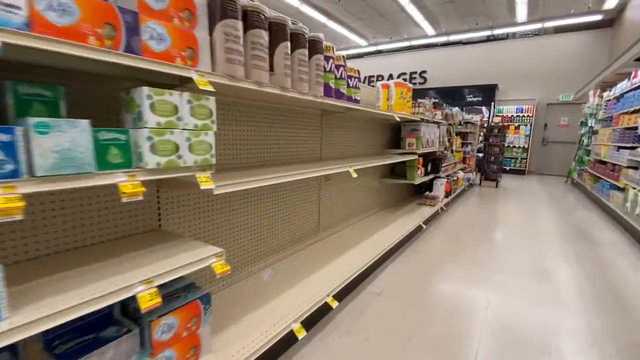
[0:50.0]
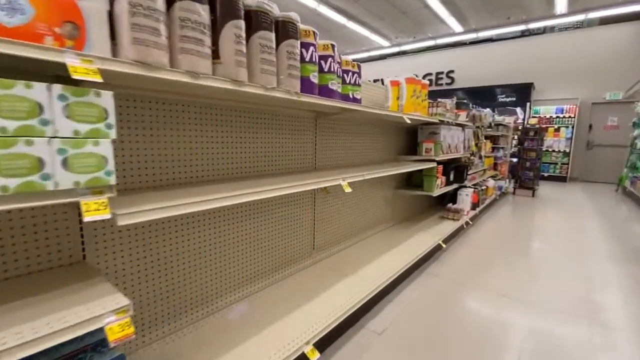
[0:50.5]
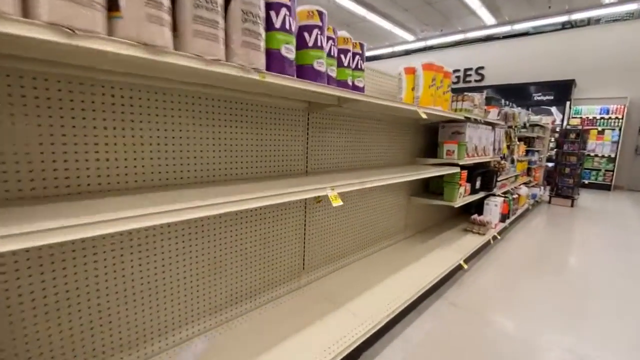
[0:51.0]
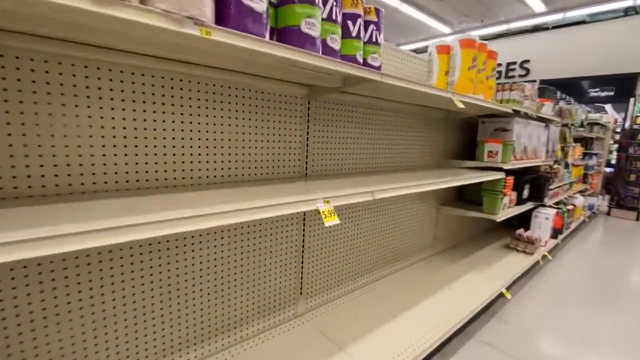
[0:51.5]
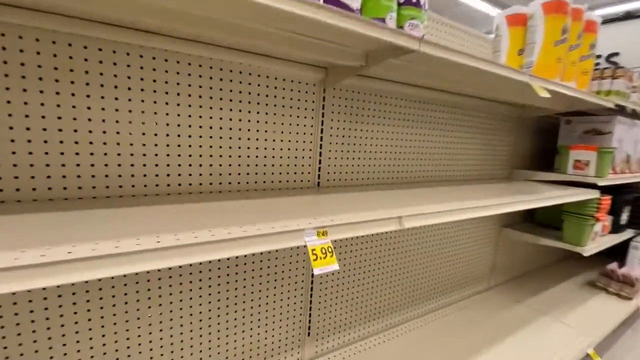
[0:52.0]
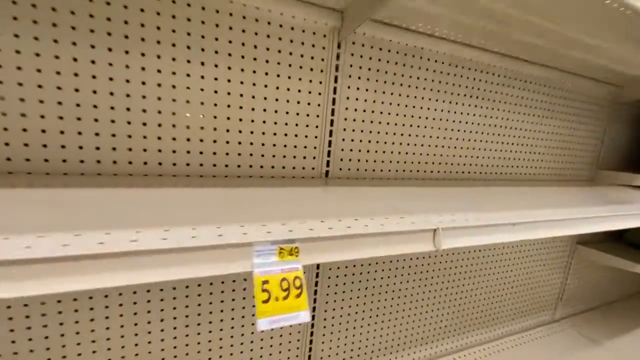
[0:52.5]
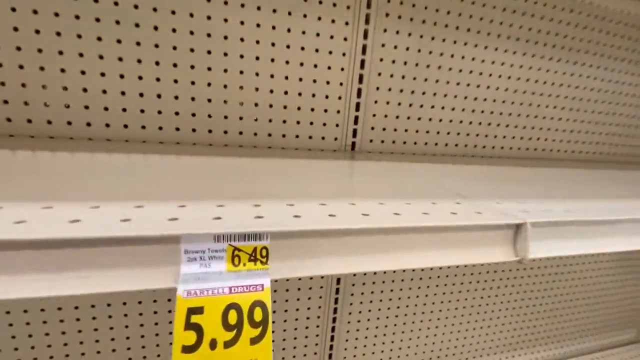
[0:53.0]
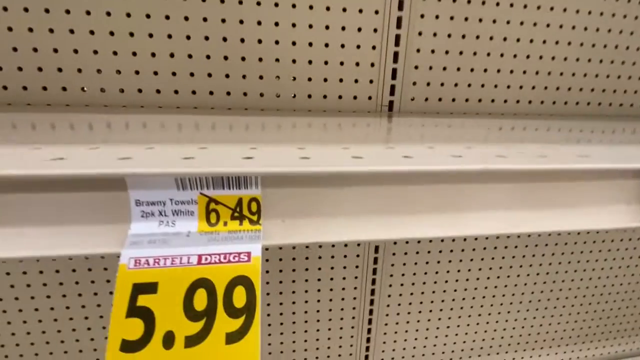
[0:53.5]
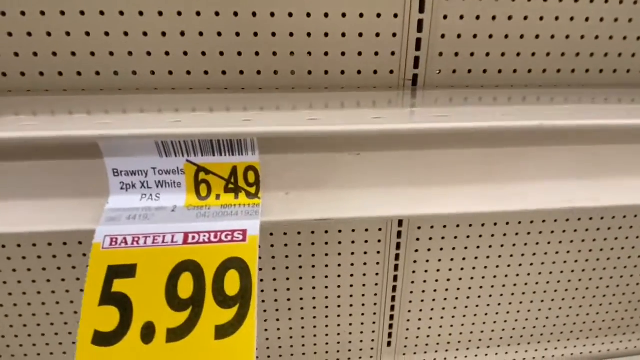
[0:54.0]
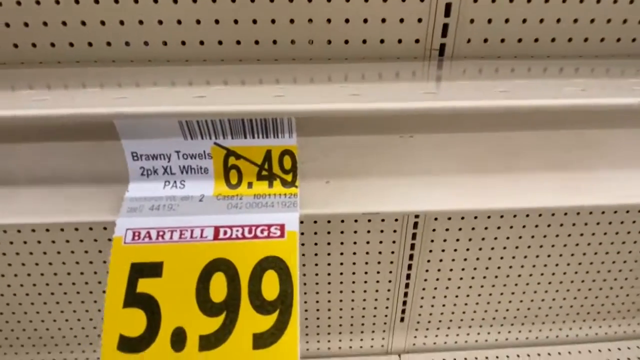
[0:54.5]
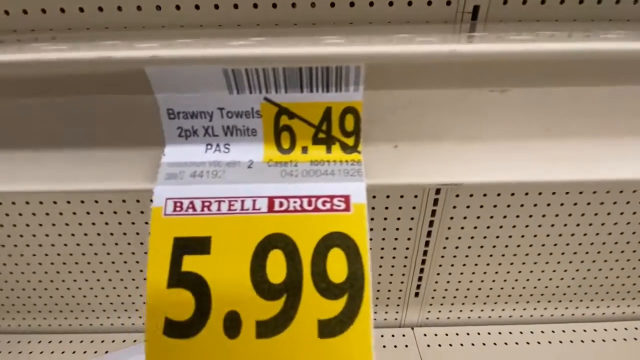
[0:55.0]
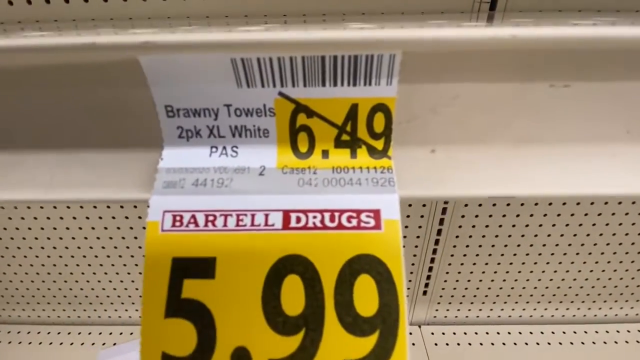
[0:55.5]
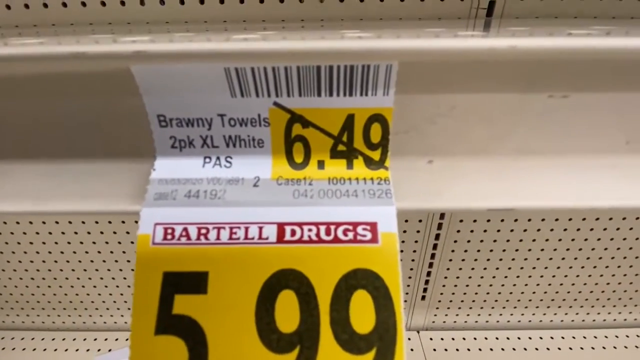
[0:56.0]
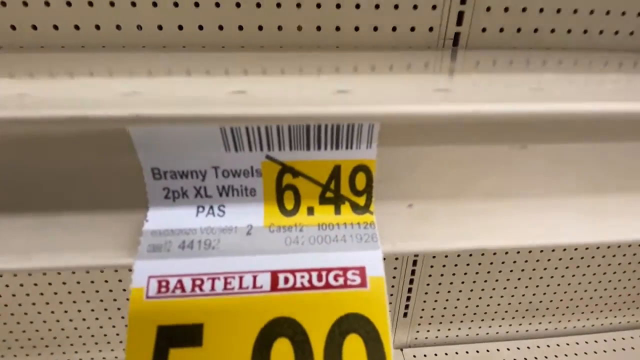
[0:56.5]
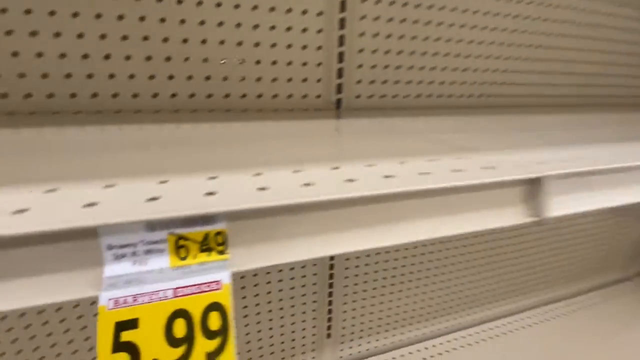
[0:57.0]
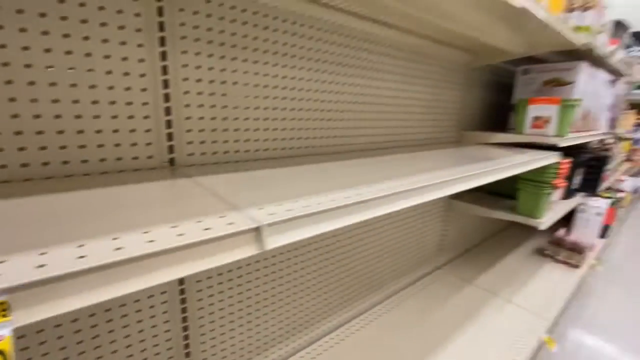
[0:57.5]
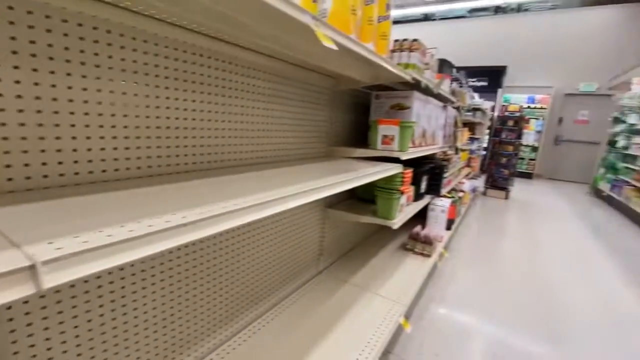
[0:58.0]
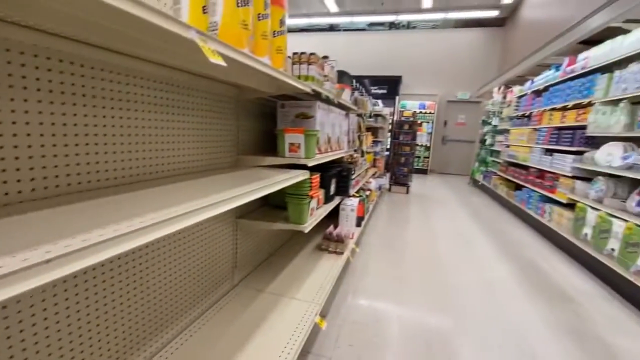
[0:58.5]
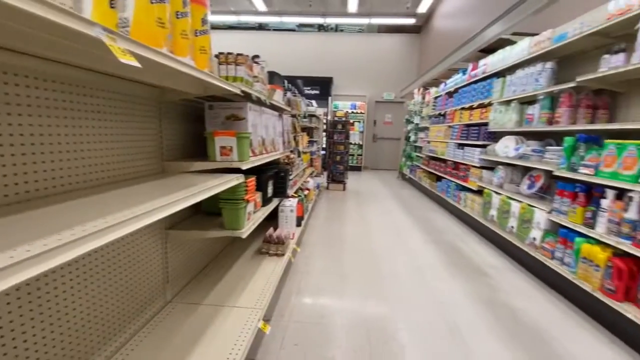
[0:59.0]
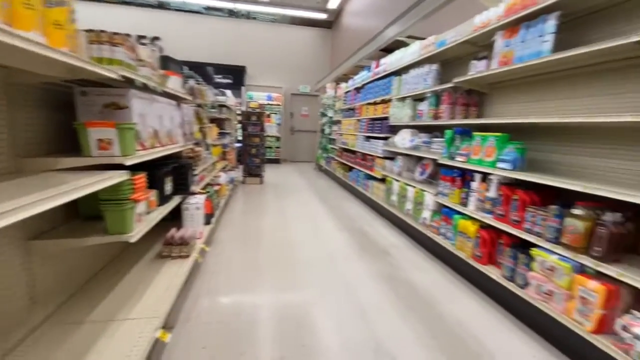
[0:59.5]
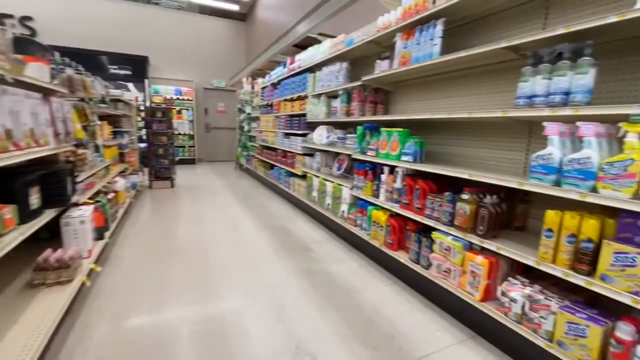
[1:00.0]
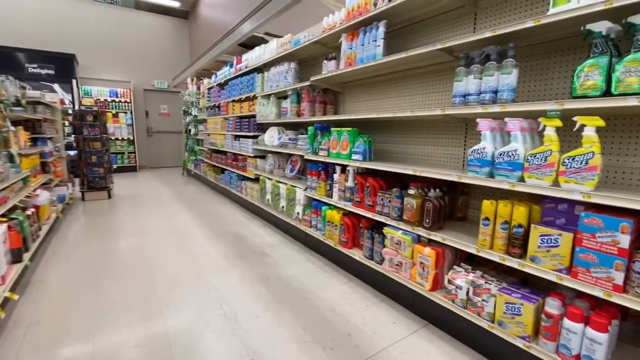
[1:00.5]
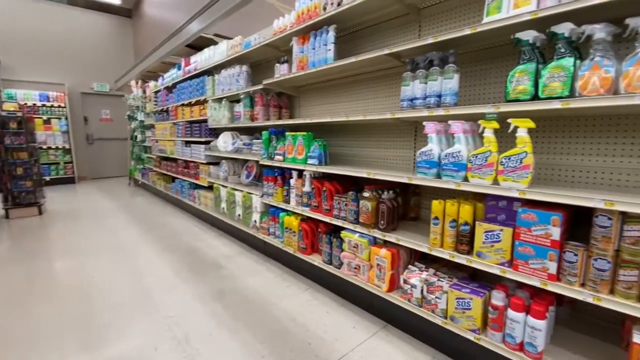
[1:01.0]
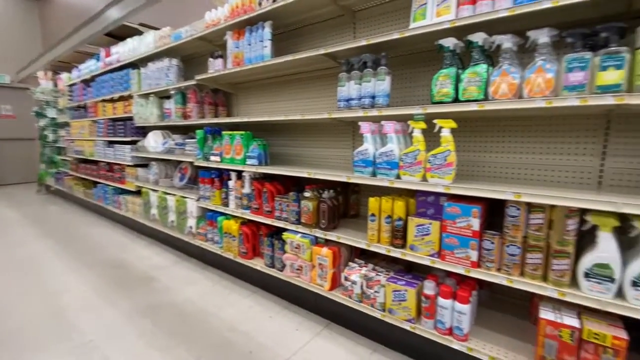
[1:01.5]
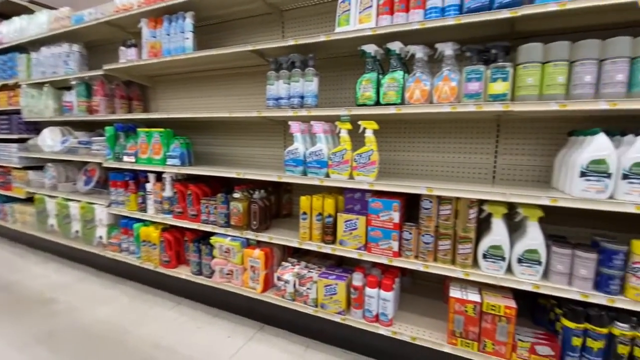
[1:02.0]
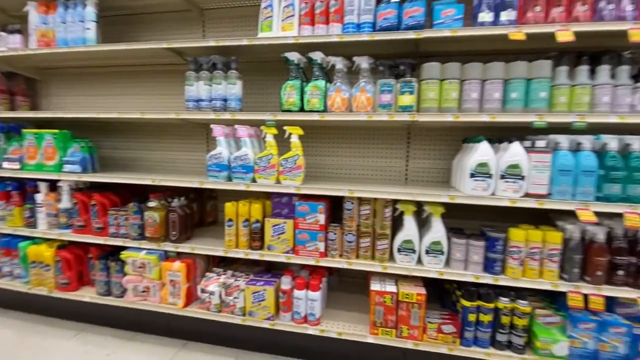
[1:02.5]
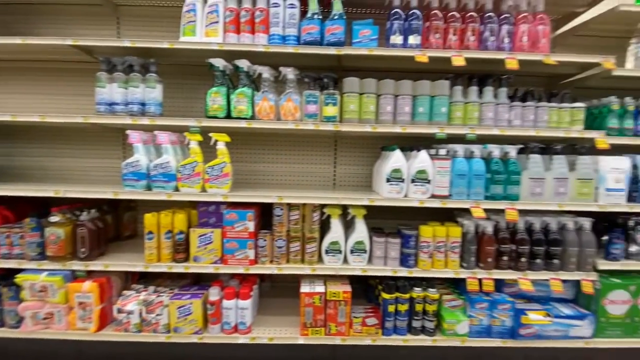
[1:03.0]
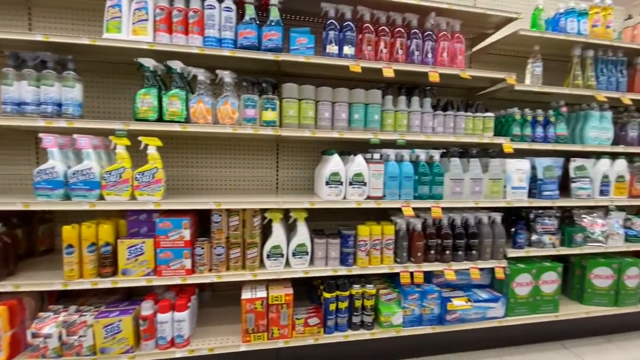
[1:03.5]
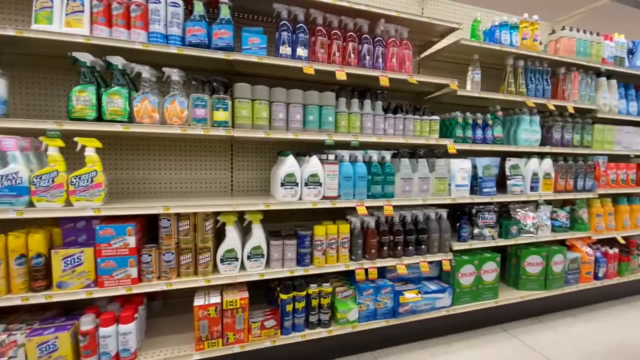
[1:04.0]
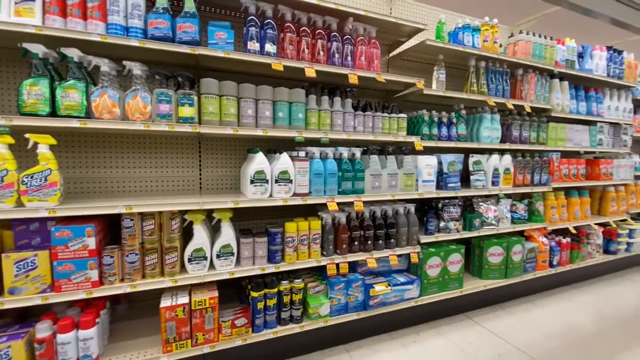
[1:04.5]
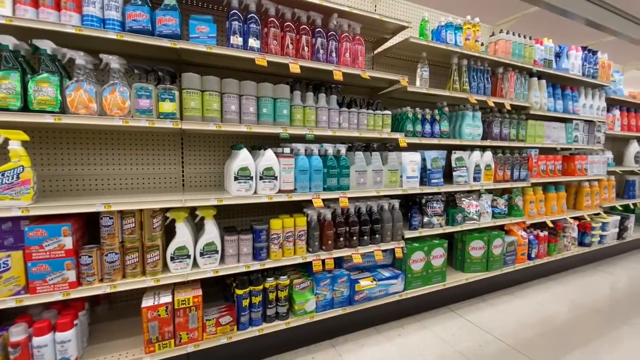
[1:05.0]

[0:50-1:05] On the left there is an empty spot for a "Bronnie Towels" two-pack; the price cannot be seen. The camera then moves over to the right, apparently to shelves it went down before. These are paper towels, Bronnie Towels, which were $6.99, now $6.49, and apparently on sale for $5. A label says "two-pack," but the space is empty; there are no Bronnie Towels available on the shelf. The camera turns around to show the opposite side across the aisle, which appears to hold cleaning products and soaps, seemingly dishwasher soap and possibly laundry detergent; it is hard to see much because the camera moves so fast. There are some sprays, apparently window cleaner, on the shelf on the right.